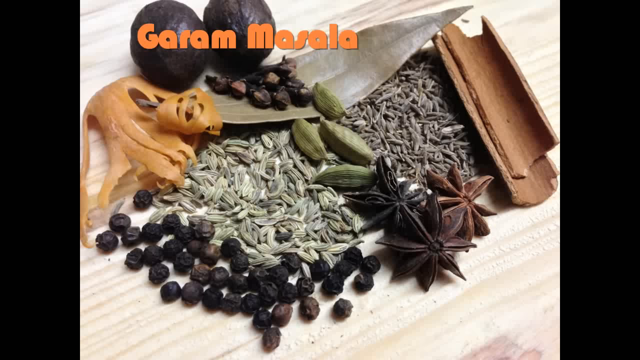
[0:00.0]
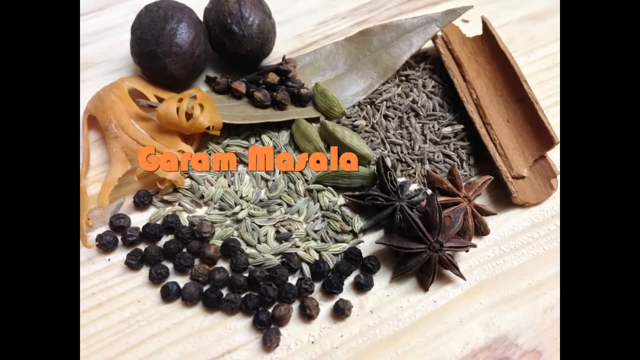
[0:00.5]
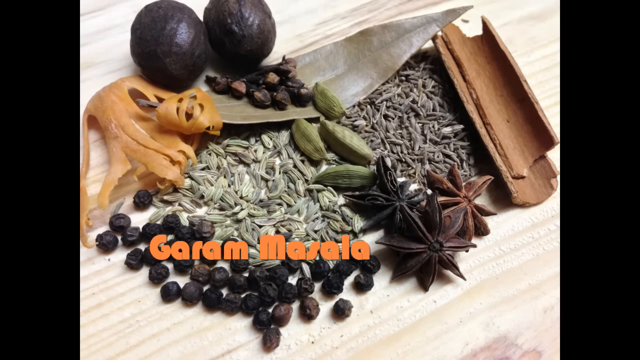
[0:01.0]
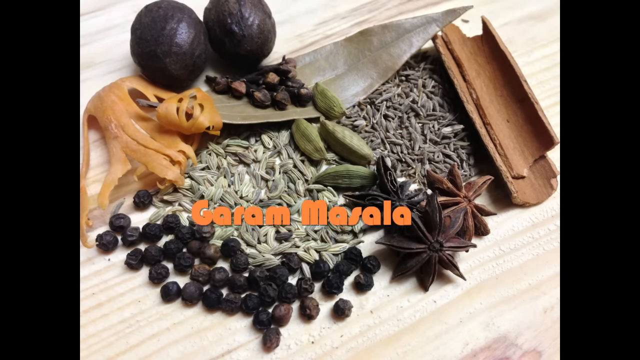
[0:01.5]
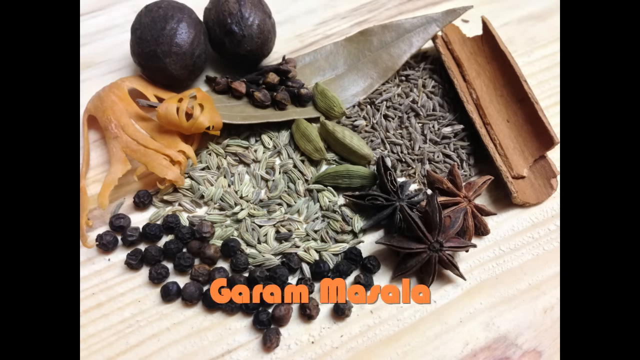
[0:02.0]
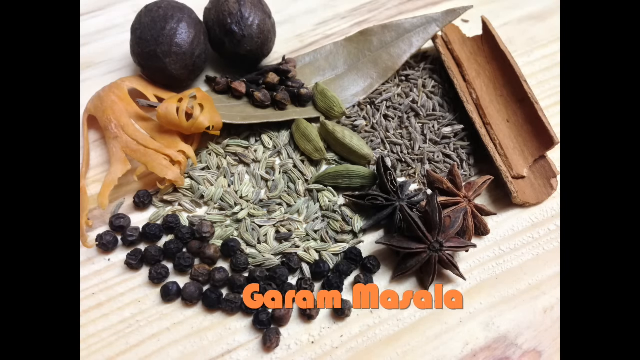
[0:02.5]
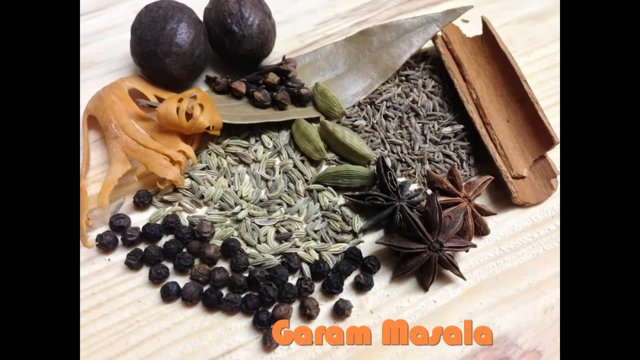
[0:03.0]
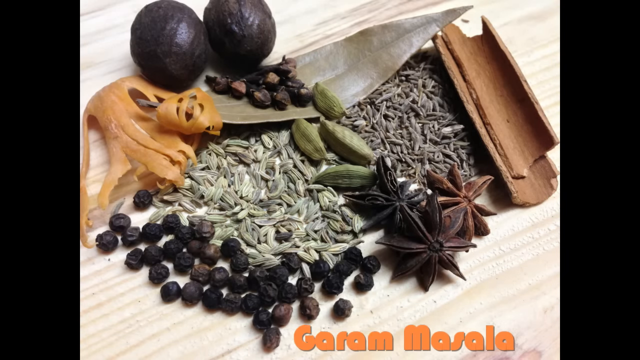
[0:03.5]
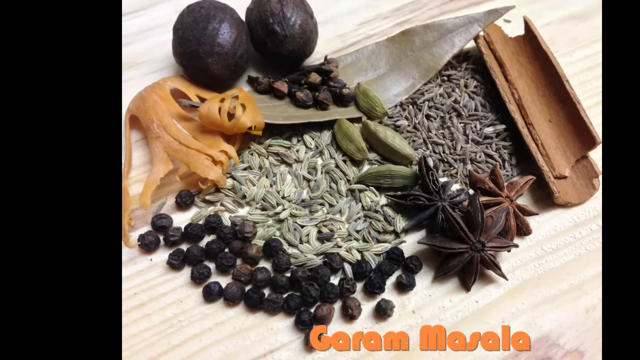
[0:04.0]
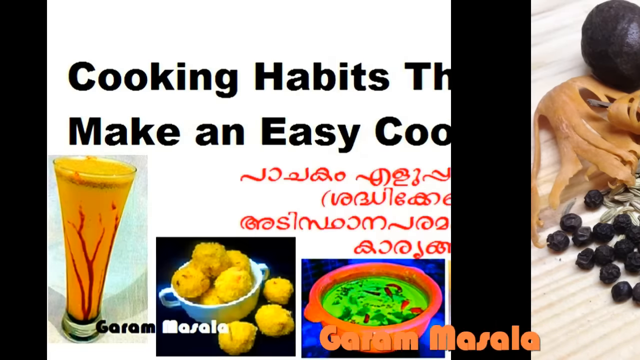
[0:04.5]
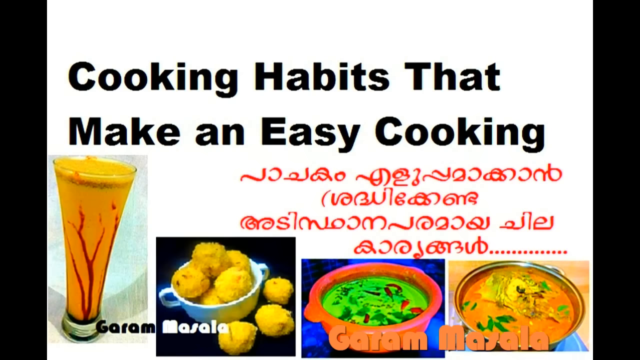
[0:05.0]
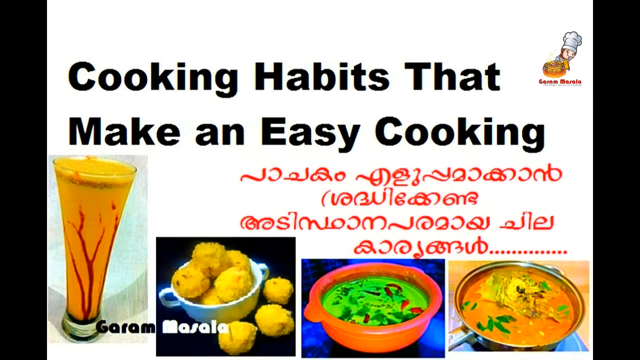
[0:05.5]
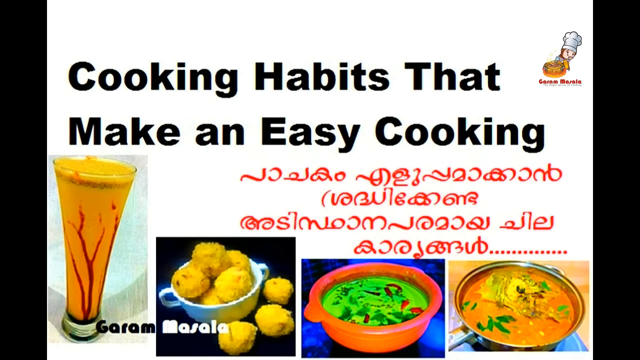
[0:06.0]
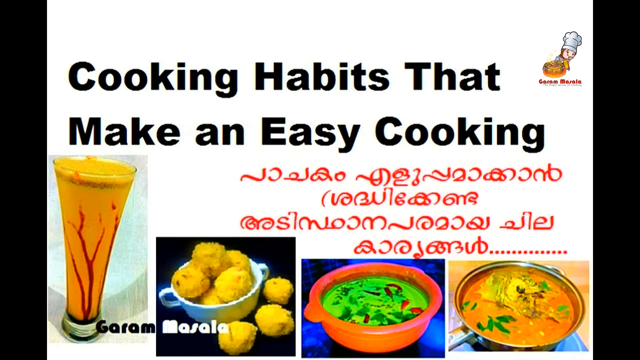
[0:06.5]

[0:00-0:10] A counter holds a whole bunch of spices, and in the foreground orange text reads "garum masala." The text bounces around, and then the video cuts to another slide with black text reading "cooking habits that make an easy cooking." Underneath is some text written in a foreign language, and below are four dishes. One seems to be in a glass and contains an orange liquid with red streaks. To the right of it is a ramekin holding what looks like fried balls, to the right of that is a red bowl with a green liquid inside, and there is also a silver pot with orange liquid inside.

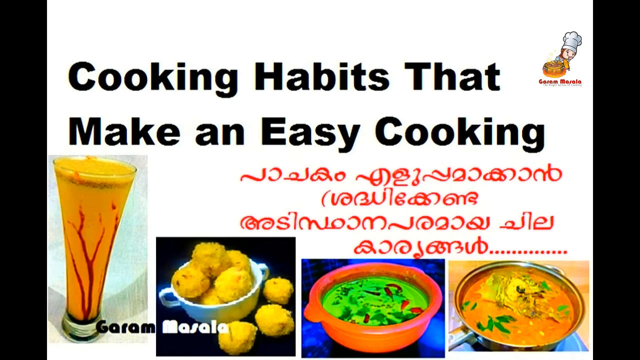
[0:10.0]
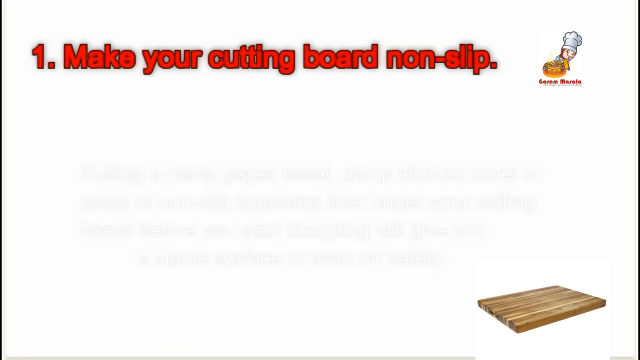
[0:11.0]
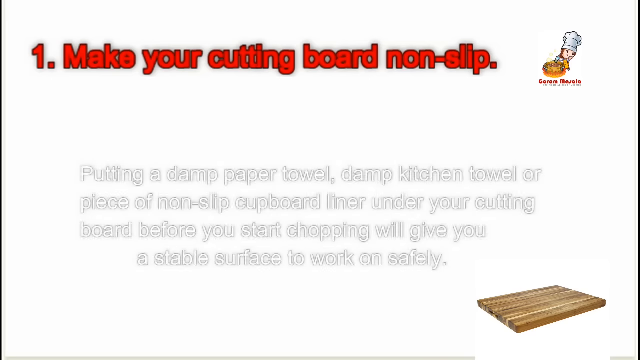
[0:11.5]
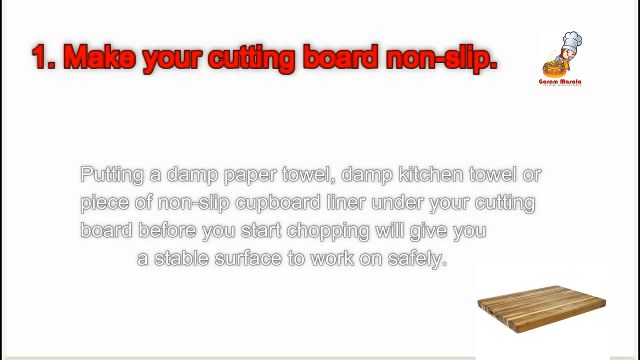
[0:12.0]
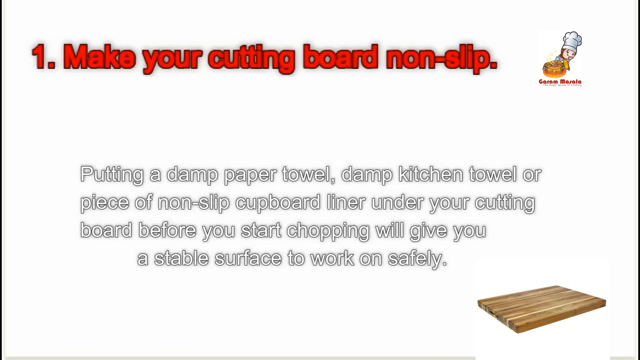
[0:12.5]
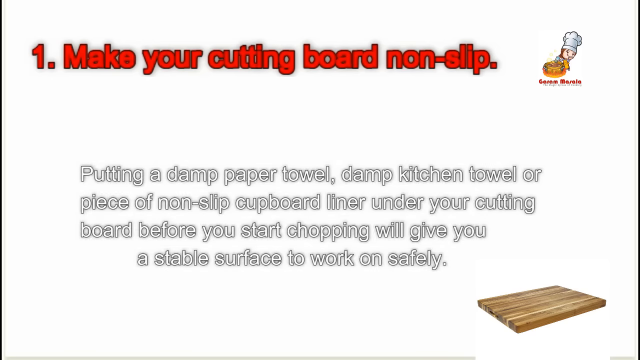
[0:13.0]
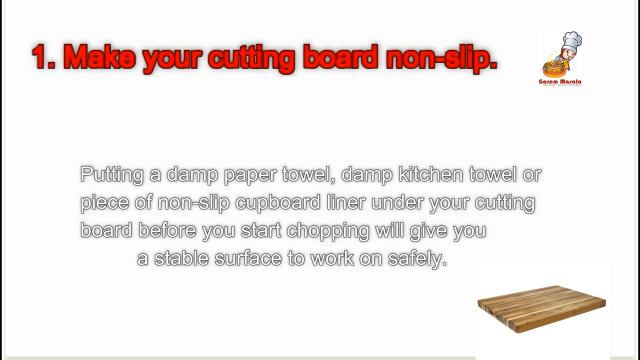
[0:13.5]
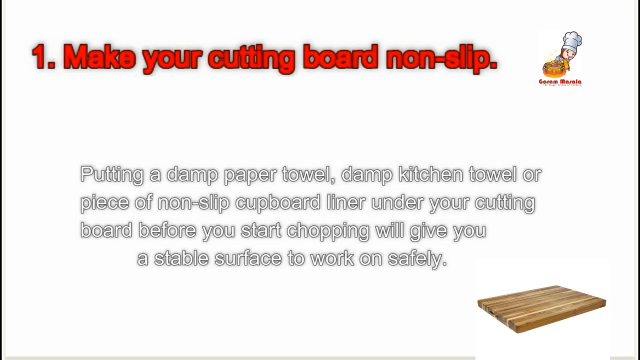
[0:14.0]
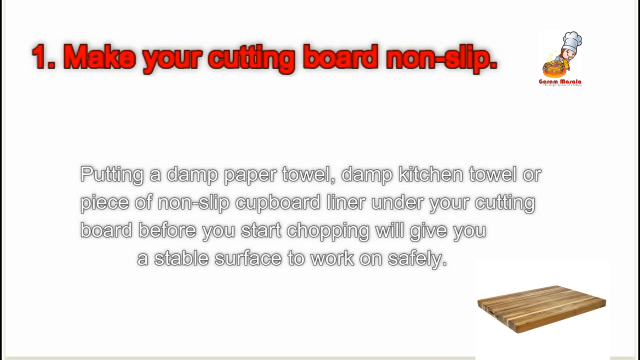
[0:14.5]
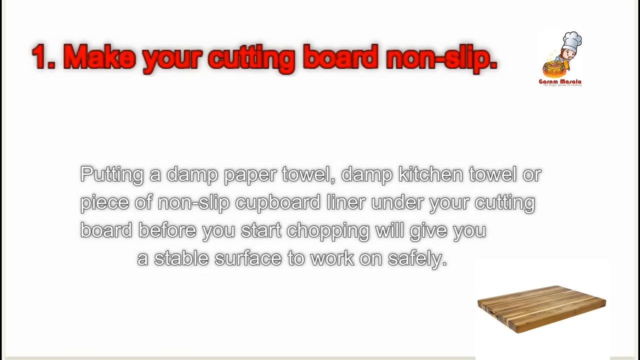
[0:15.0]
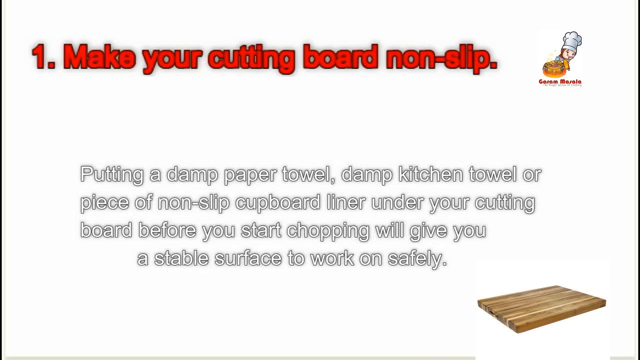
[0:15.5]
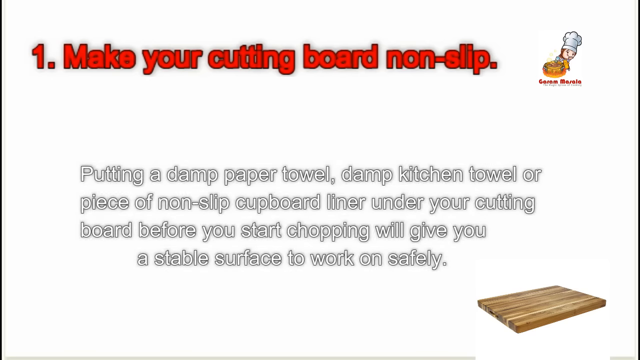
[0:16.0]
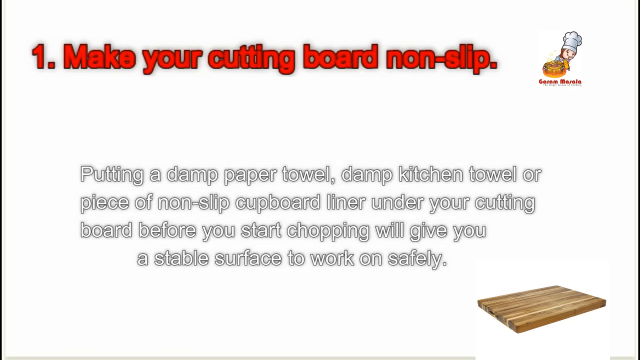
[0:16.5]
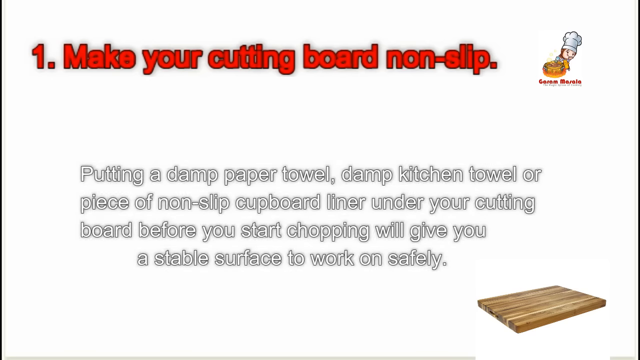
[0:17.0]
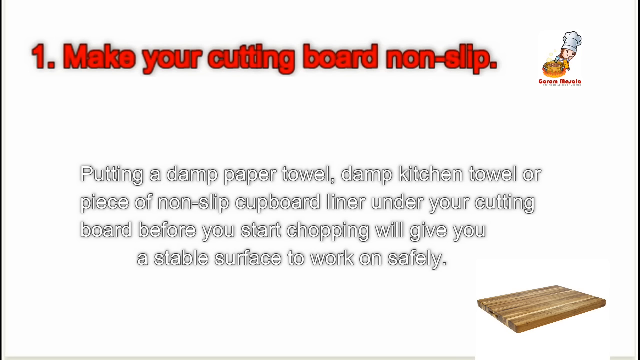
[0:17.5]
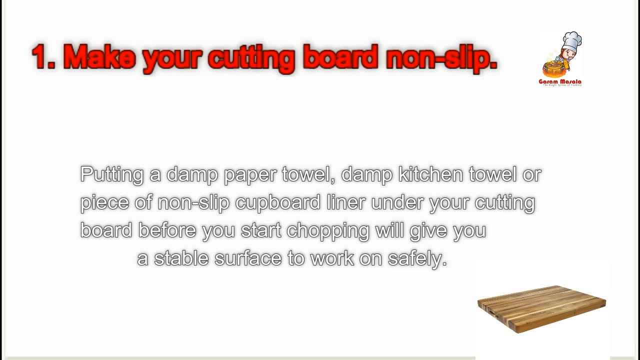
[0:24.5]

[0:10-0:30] A slide shows black text reading "cooking habits that make an easy cooking," with red text in a foreign language underneath and four dishes below; three seem to be in pots, while one is in a glass. The video cuts to a slide with red text containing the number one that reads "make your cutting board non-slip." At the bottom of the screen, white text with a black border reads "putting a damp paper towel, damp kitchen towel or a piece of non-slip cut board liner under your cutting board before you start chopping will give you a stable surface to work on safely." A wooden cutting board appears in the lower right corner, and in the top right corner is a logo of what looks like a cartoon chef wearing a chef hat with some kind of dish in front of him. The background is white.